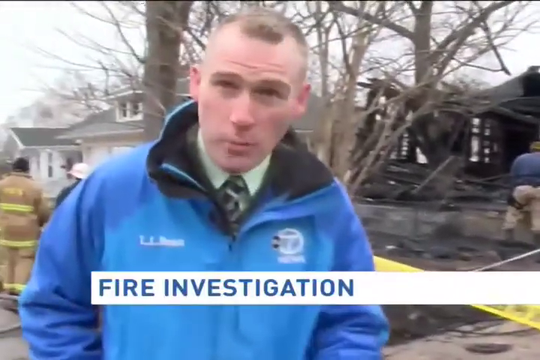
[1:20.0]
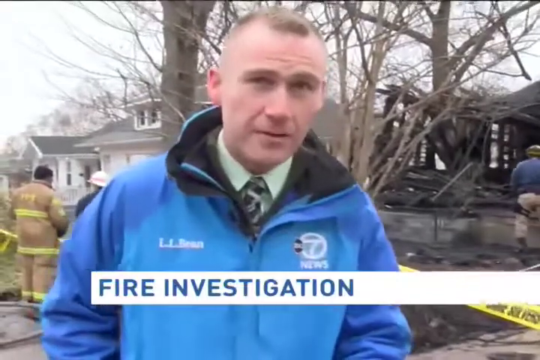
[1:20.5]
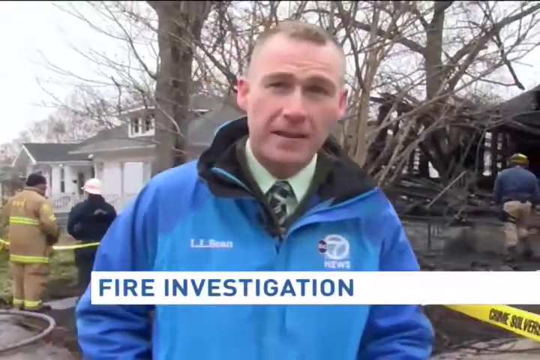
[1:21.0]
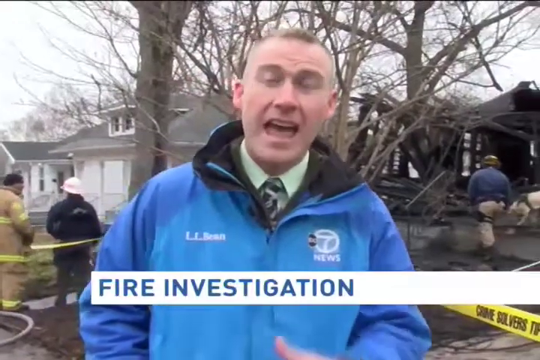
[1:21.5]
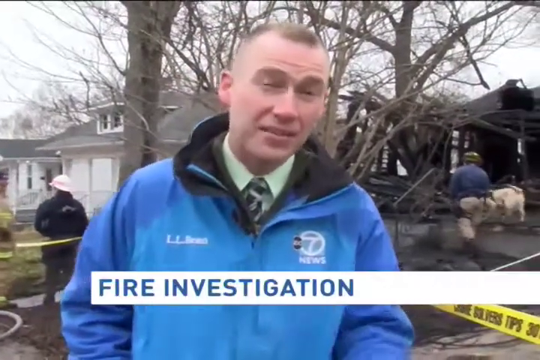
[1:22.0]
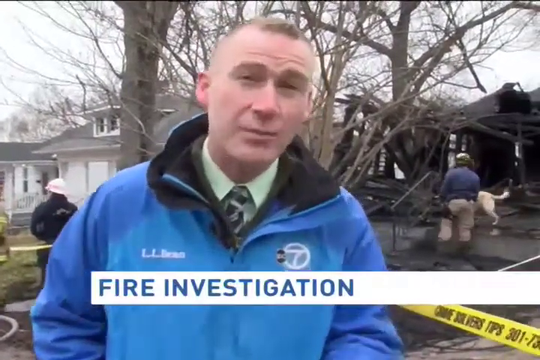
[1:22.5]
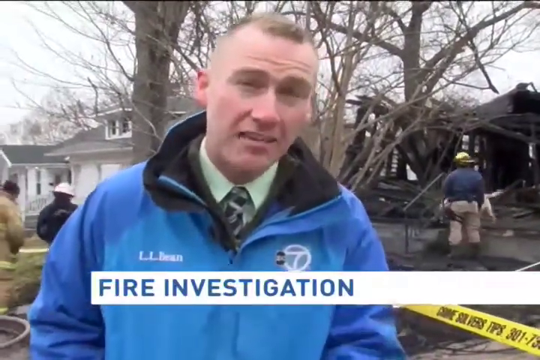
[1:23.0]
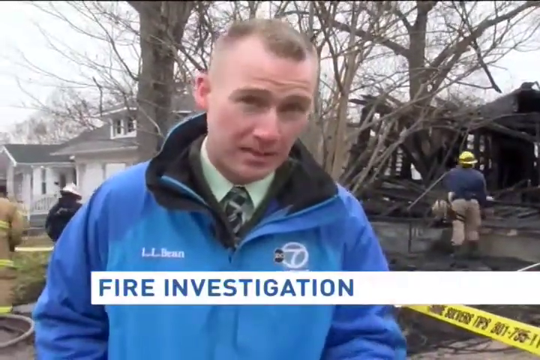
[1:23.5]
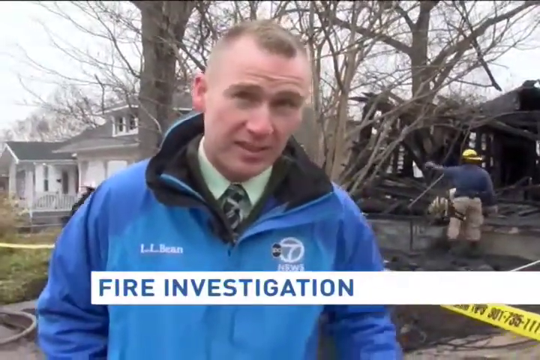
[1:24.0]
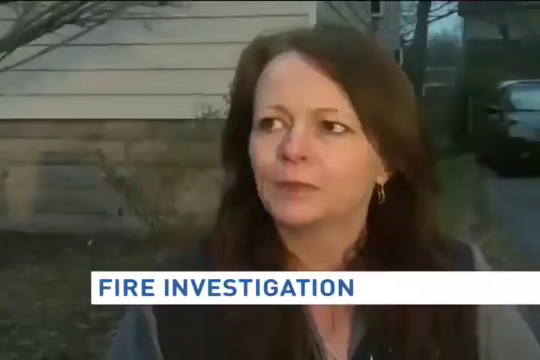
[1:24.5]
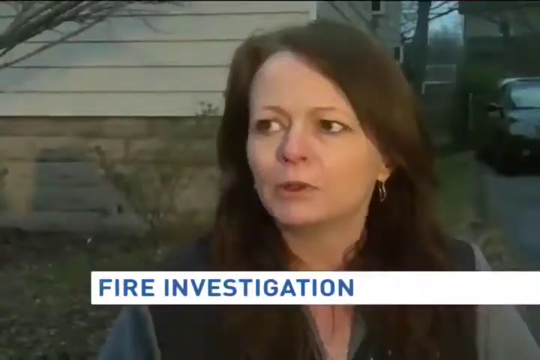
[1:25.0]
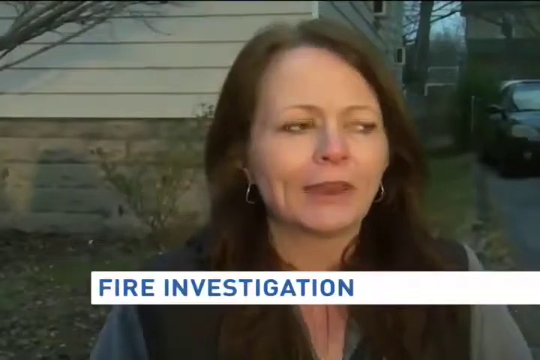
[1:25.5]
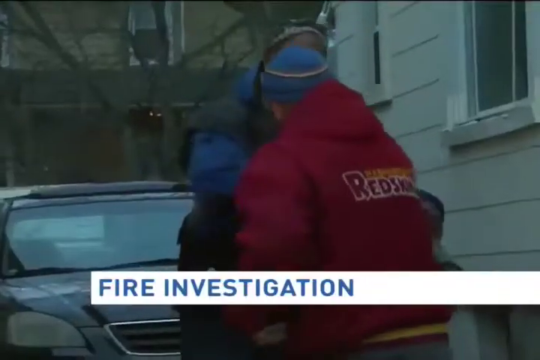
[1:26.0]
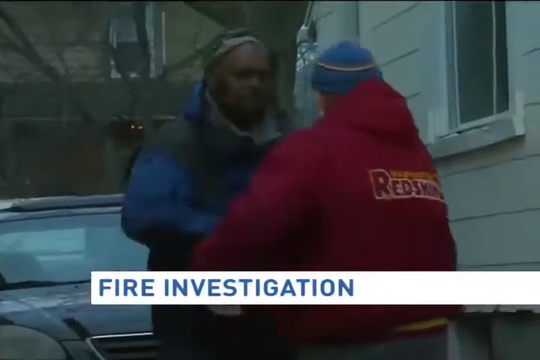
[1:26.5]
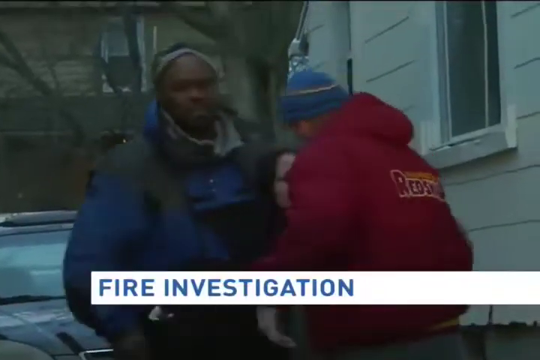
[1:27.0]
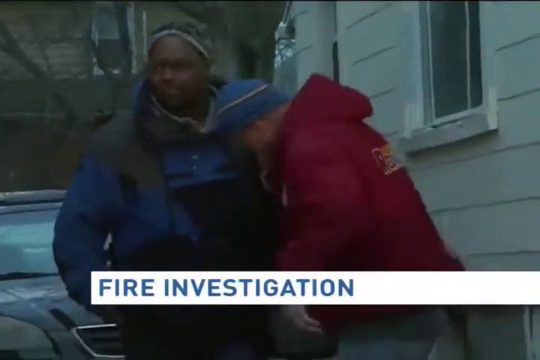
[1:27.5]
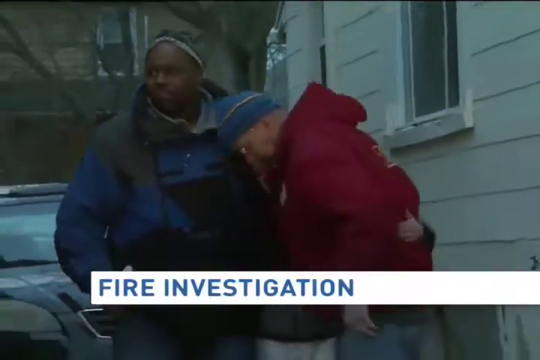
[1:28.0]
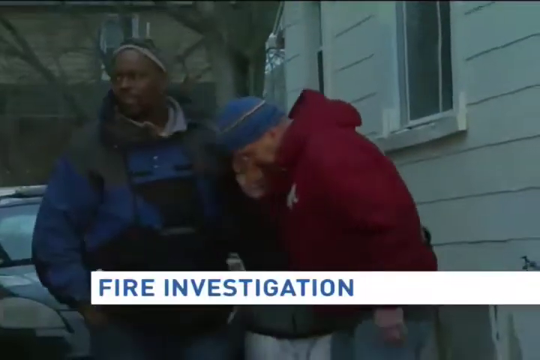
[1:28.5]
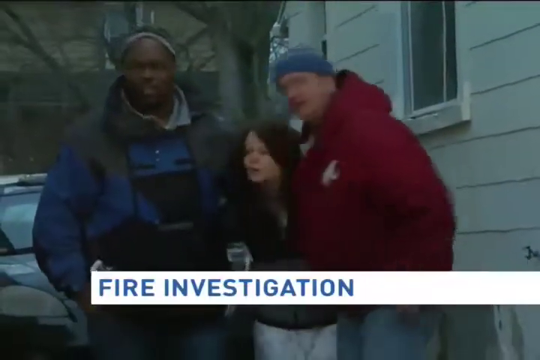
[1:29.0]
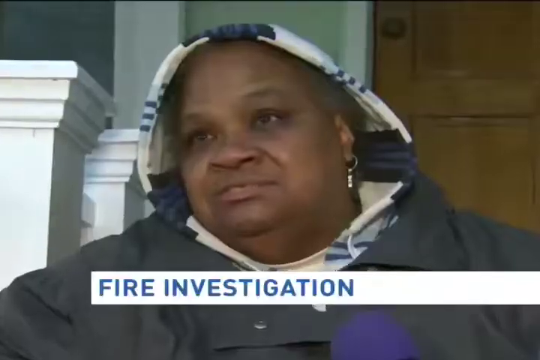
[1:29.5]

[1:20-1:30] The reporter, who appears to work for ABC News Channel 7, wears a blue jacket with "ABC 7 News" on it as he talks to the camera, reporting on the fire, with a burnt-down house behind him. "Fire investigation" is at the bottom of the screen, and workers are in the background. A man with a dog walks around the house. It cuts to a woman being interviewed, then to a man shaking hands with another man outside a building, and then to someone else being interviewed outside a house.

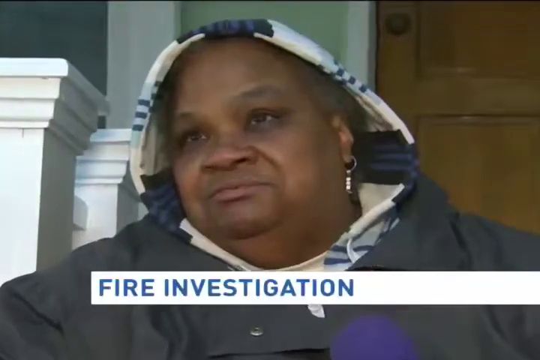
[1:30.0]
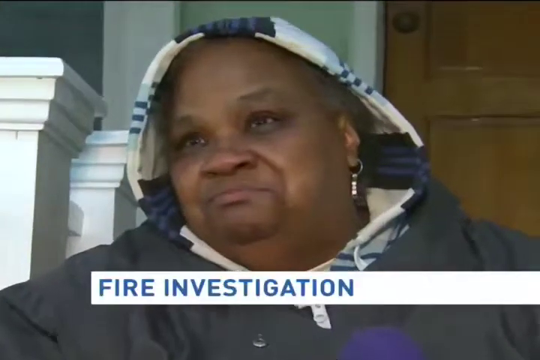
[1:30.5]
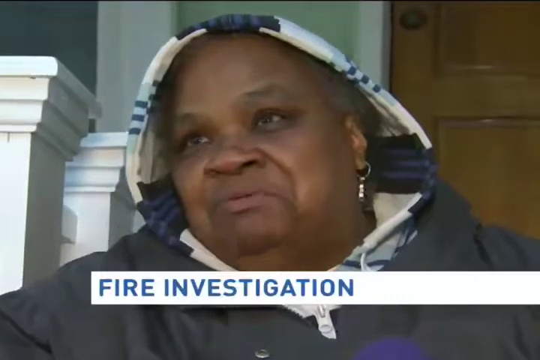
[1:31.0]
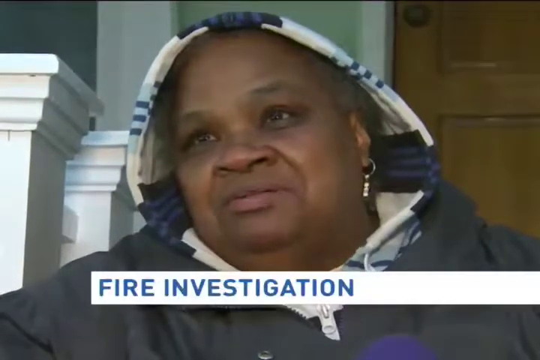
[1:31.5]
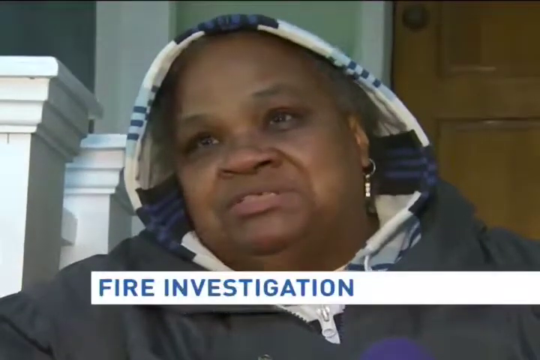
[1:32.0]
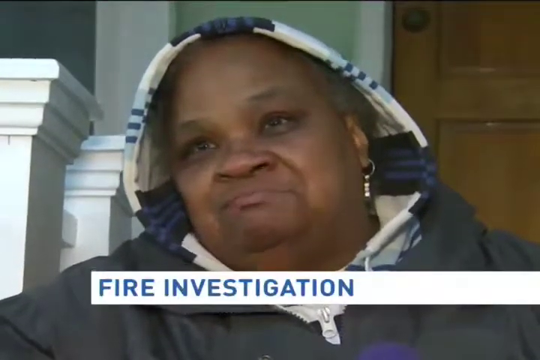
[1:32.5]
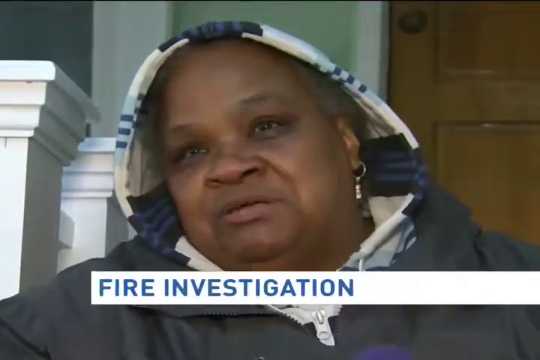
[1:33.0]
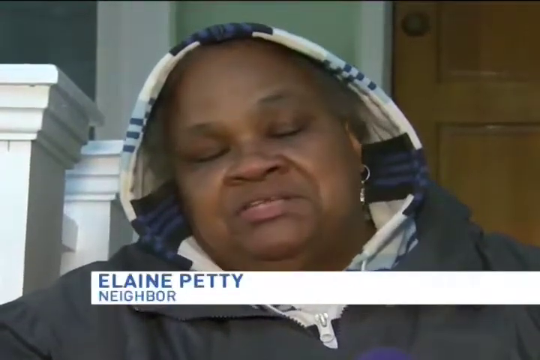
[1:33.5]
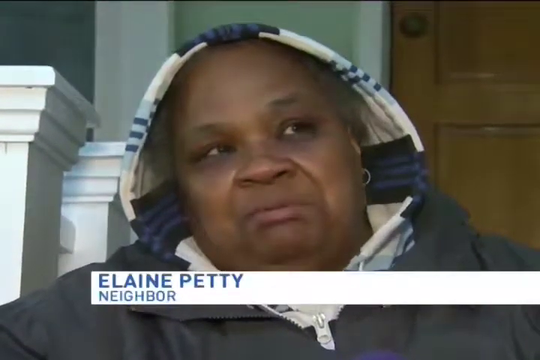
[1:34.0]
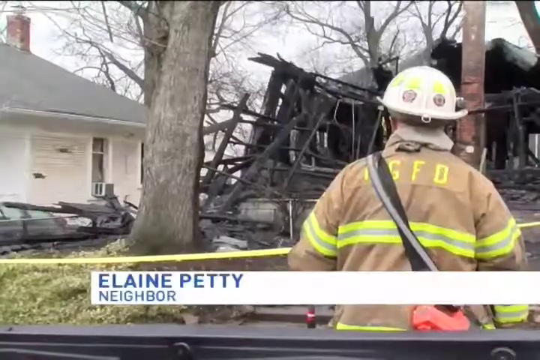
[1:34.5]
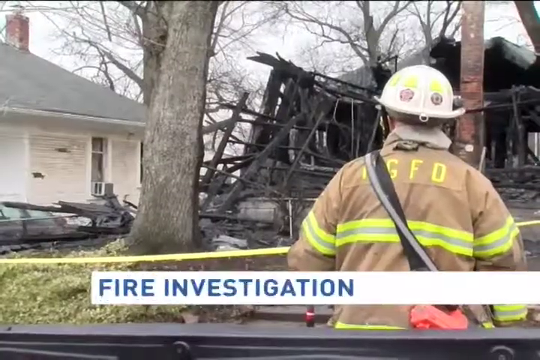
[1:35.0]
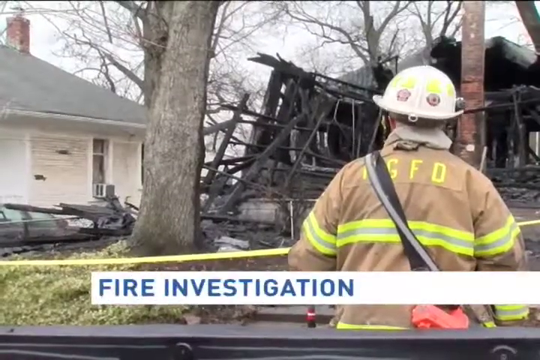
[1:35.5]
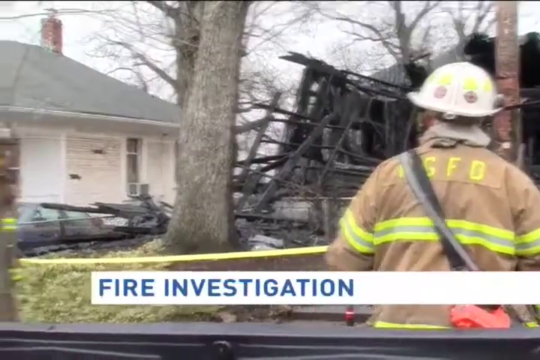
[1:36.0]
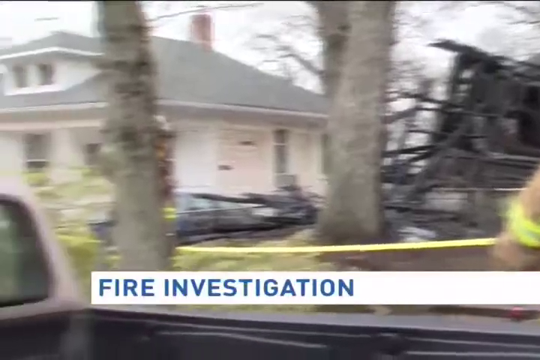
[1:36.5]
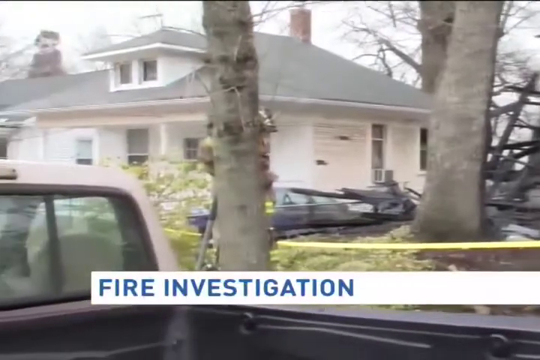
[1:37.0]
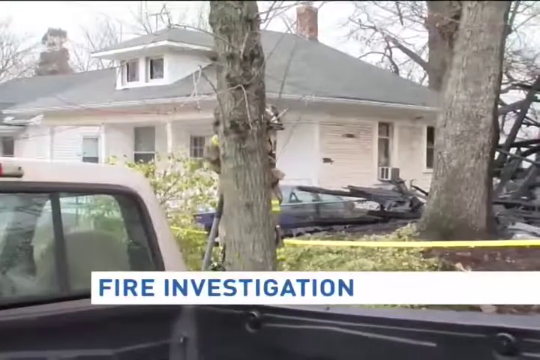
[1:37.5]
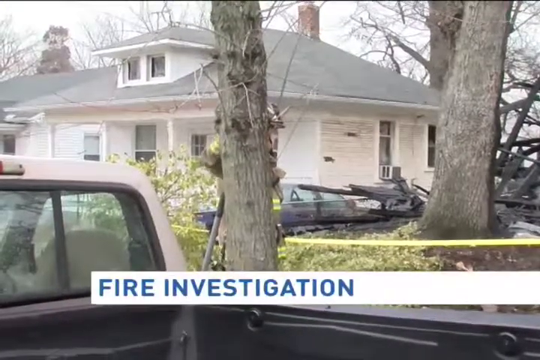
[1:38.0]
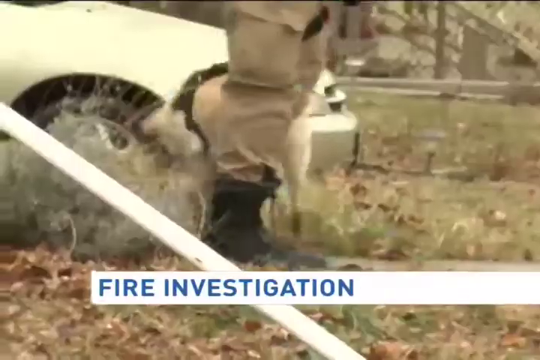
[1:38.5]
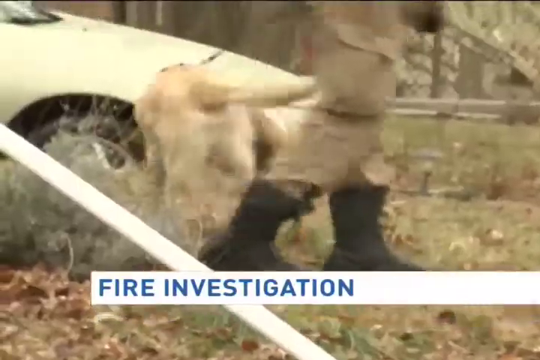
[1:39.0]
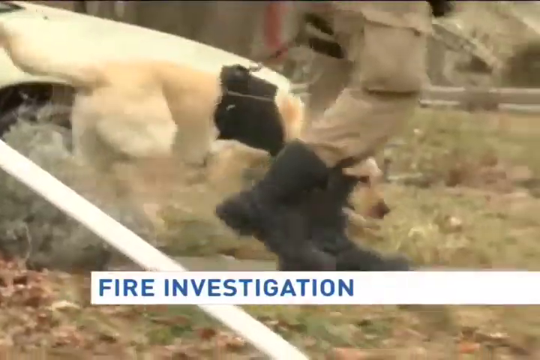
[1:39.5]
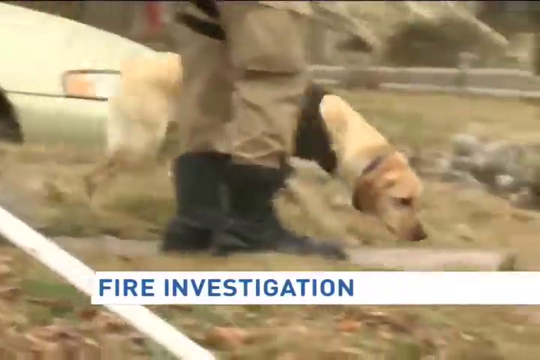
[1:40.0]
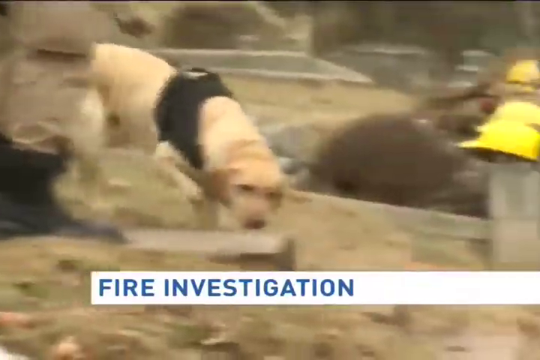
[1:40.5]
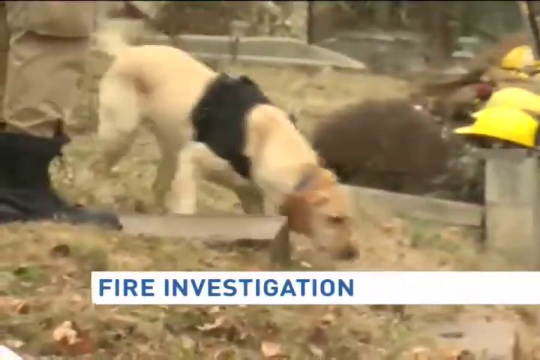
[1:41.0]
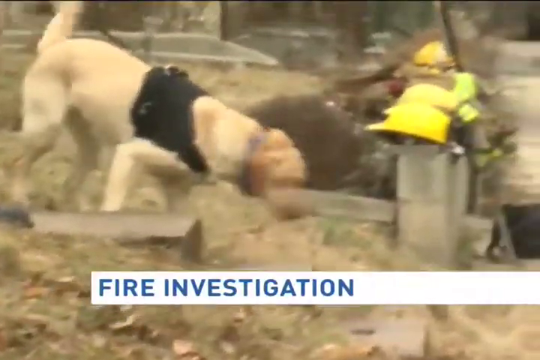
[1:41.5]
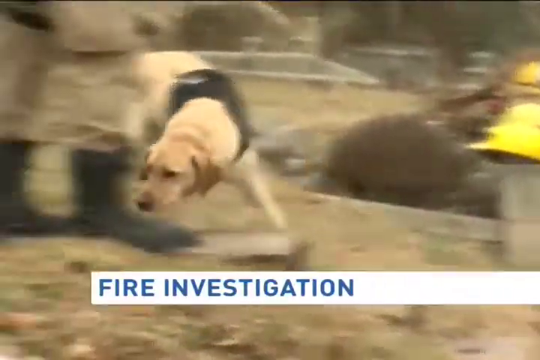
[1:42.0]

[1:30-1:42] A woman wearing a hoodie is interviewed outside a house, with a brown door behind her. She shakes her head and looks disappointed as the caption "Elaine Petty, neighbor" appears. It cuts back to "fire investigation" at the bottom of the screen, showing the back of a firefighter in a white helmet standing outside a burnt building. There is no fire, but the house is in shambles, completely burnt and black, and the firefighter just looks at it. It then cuts to a dog walking around, held on a leash by someone walking around the burnt building.